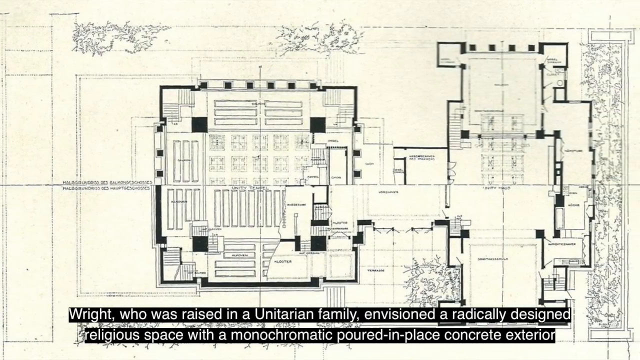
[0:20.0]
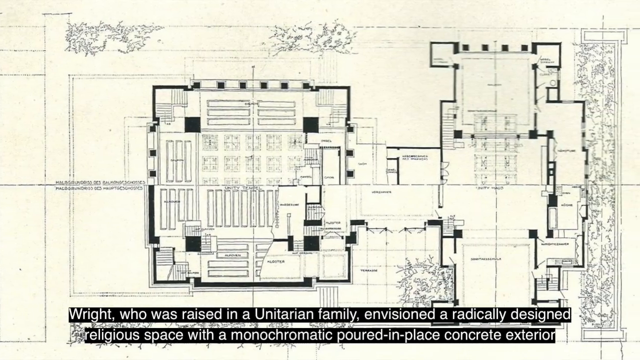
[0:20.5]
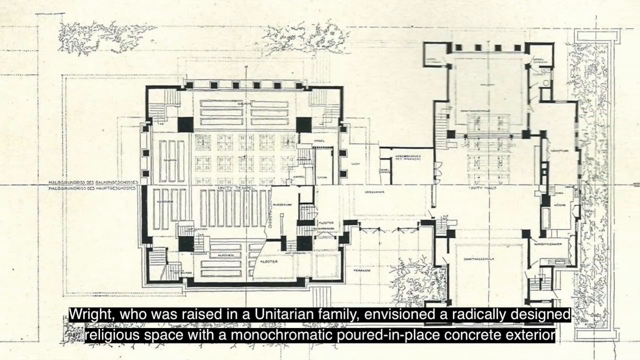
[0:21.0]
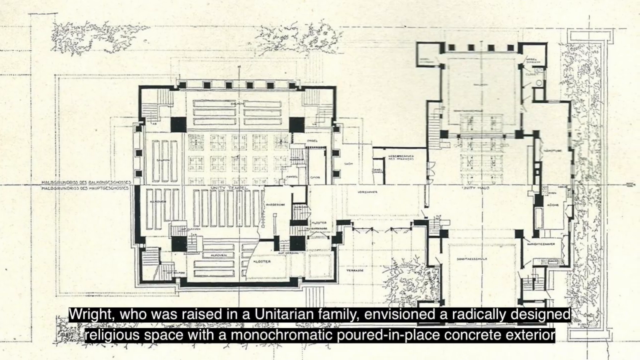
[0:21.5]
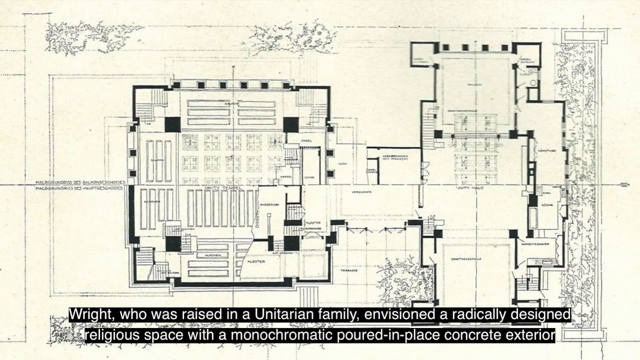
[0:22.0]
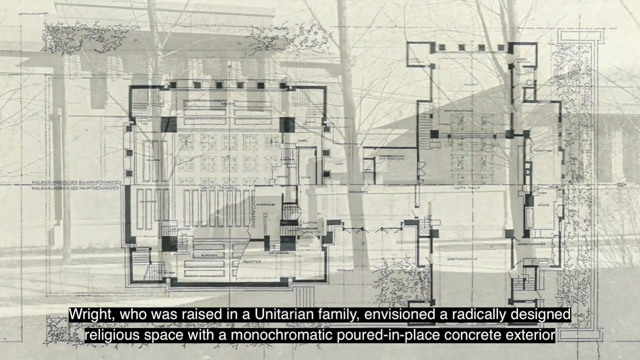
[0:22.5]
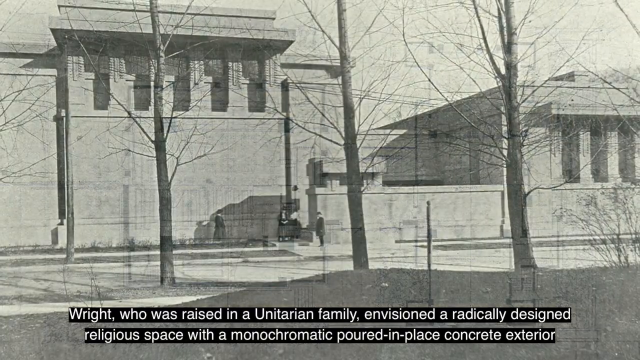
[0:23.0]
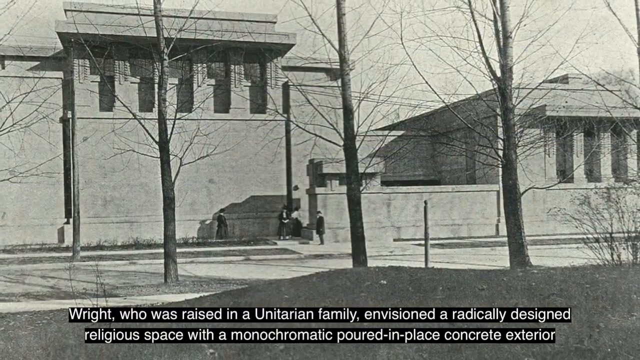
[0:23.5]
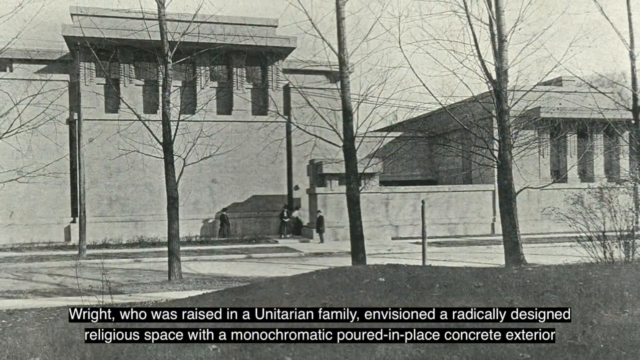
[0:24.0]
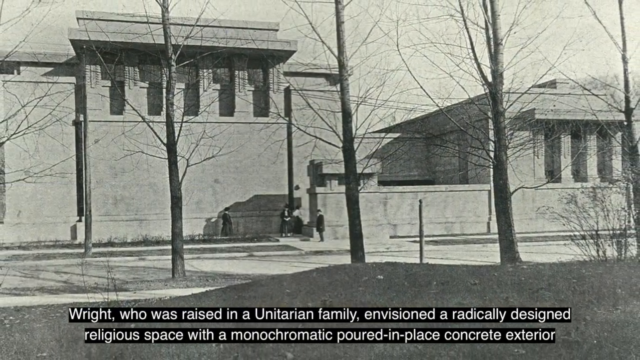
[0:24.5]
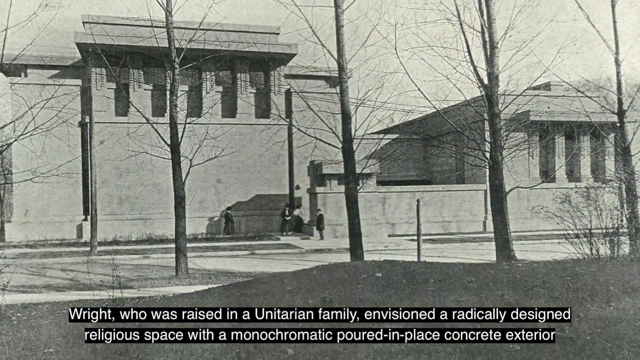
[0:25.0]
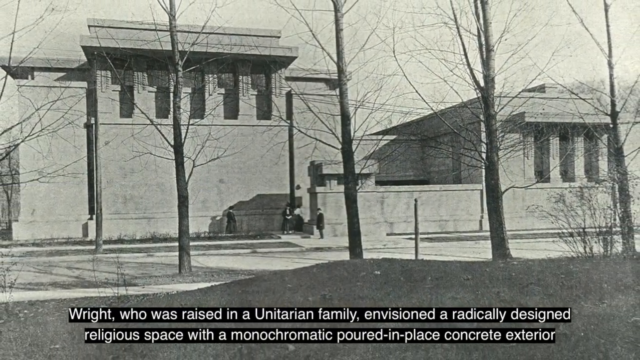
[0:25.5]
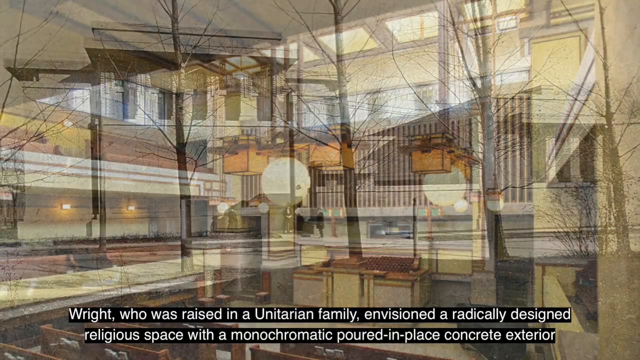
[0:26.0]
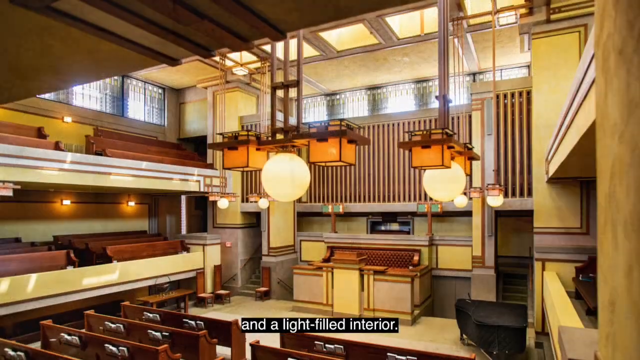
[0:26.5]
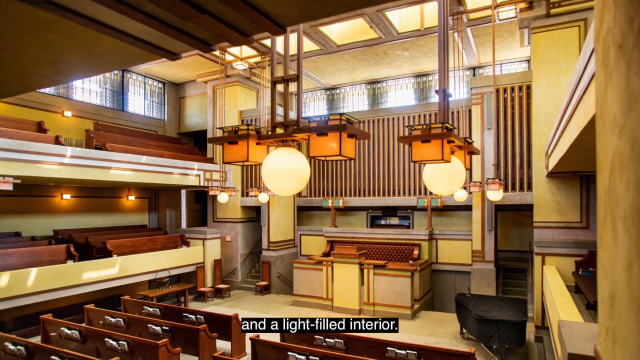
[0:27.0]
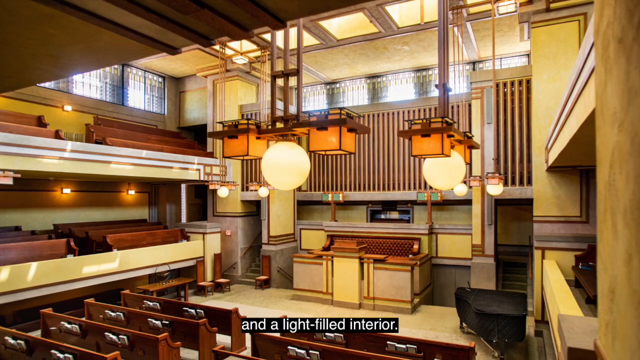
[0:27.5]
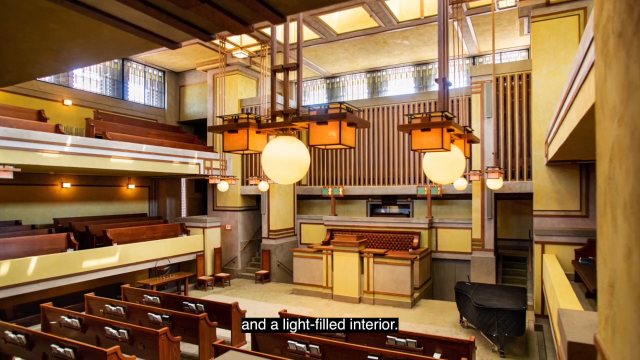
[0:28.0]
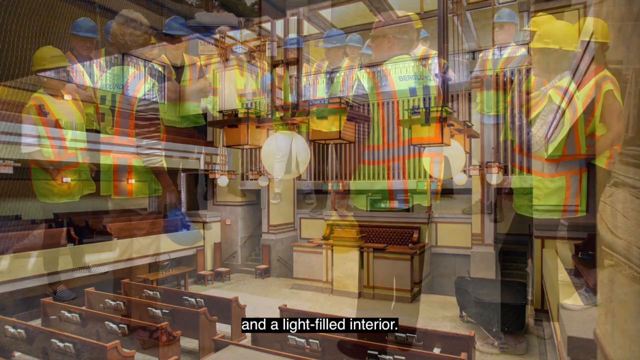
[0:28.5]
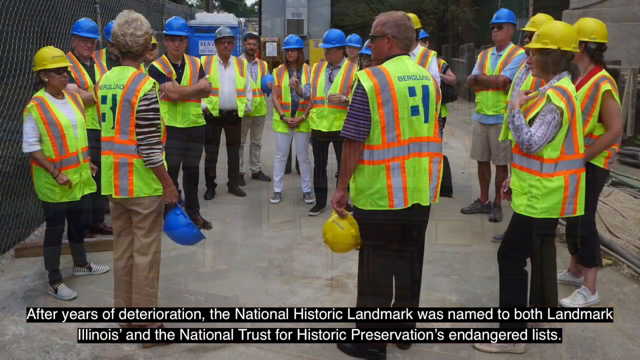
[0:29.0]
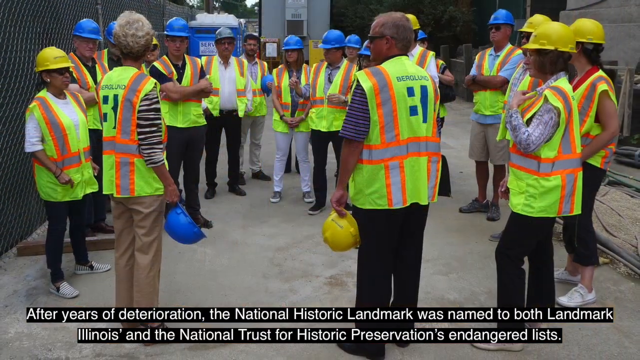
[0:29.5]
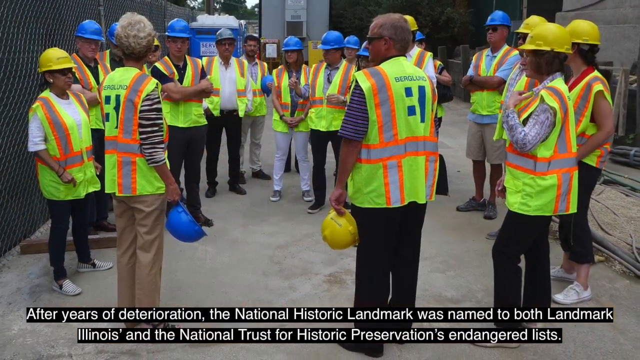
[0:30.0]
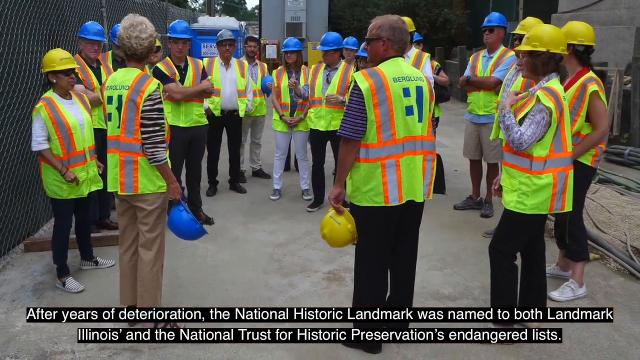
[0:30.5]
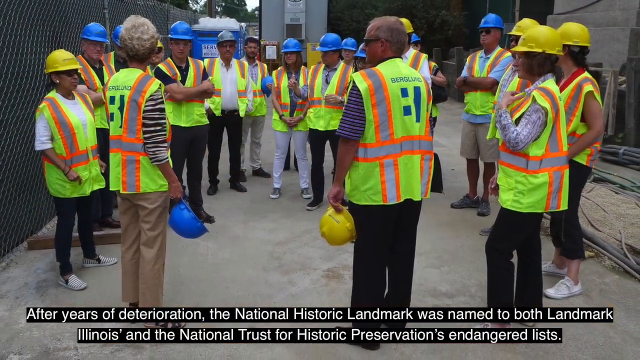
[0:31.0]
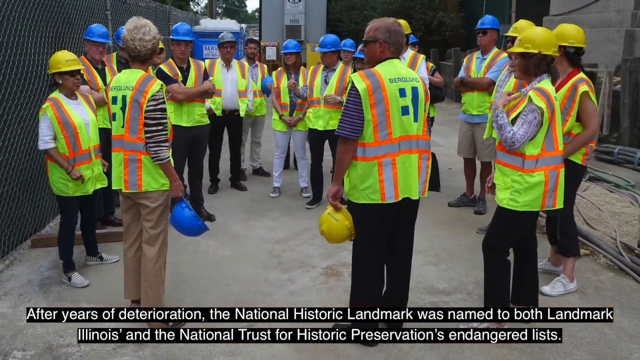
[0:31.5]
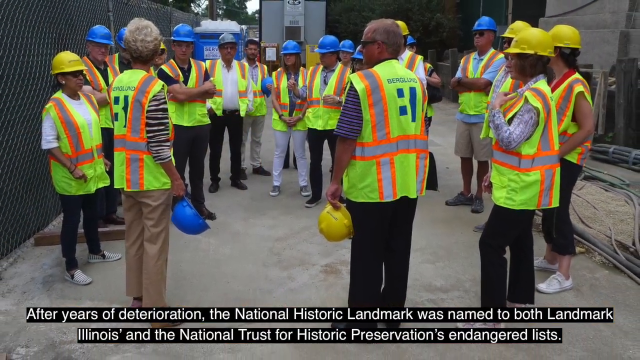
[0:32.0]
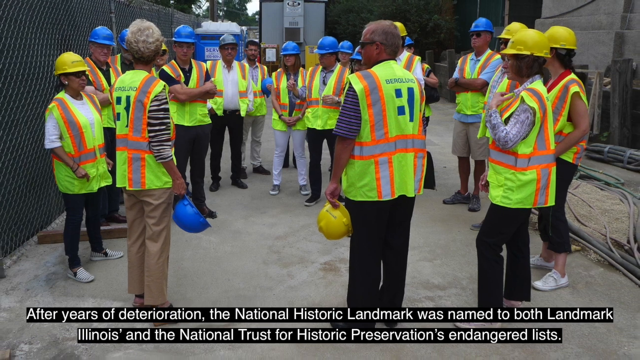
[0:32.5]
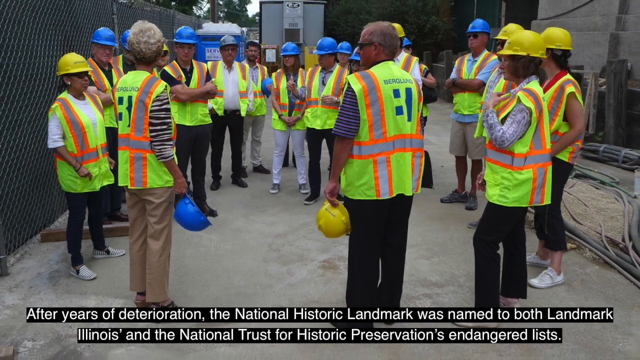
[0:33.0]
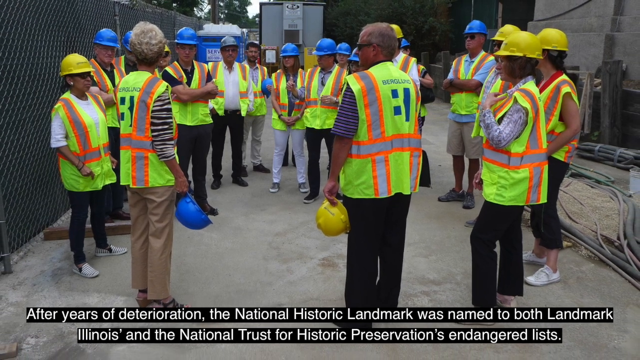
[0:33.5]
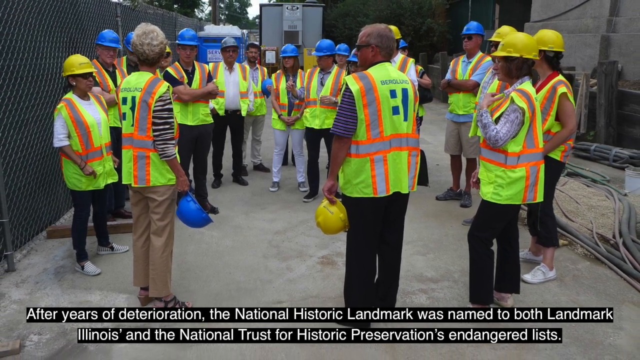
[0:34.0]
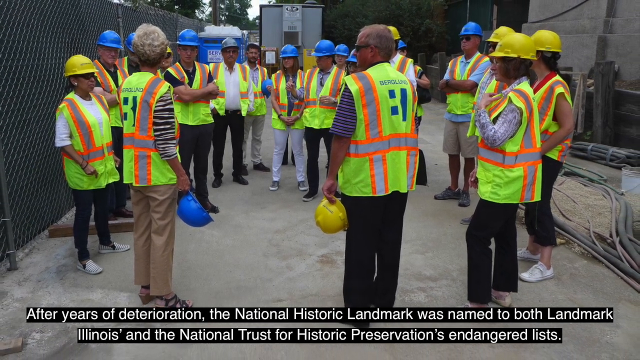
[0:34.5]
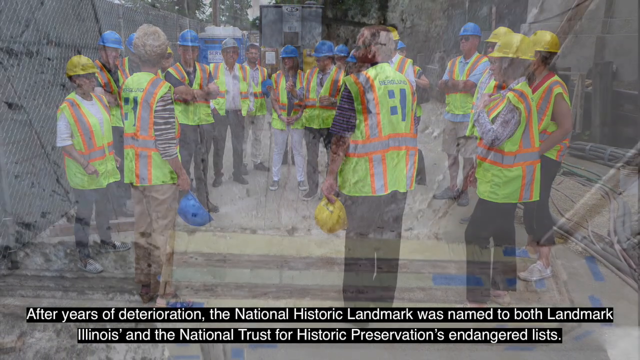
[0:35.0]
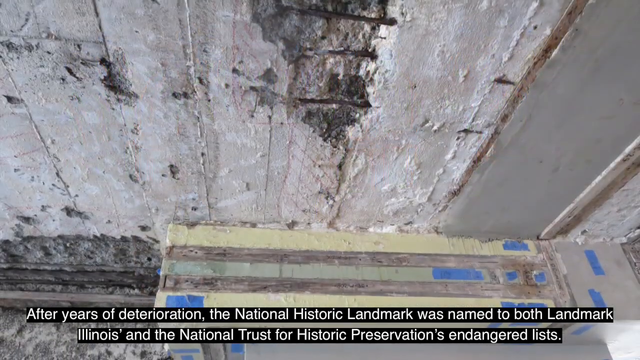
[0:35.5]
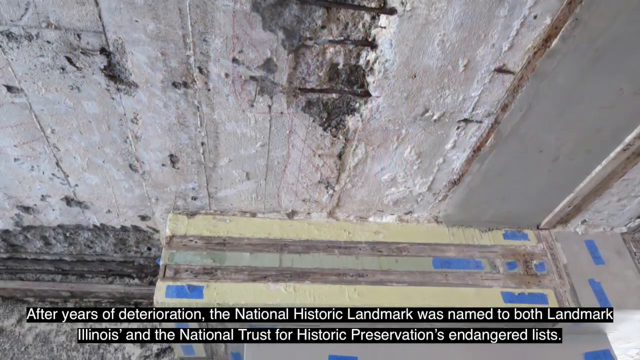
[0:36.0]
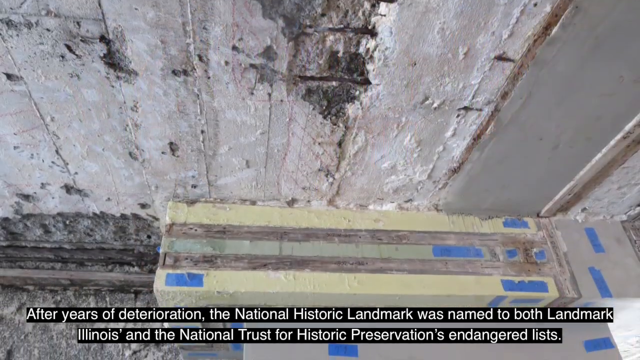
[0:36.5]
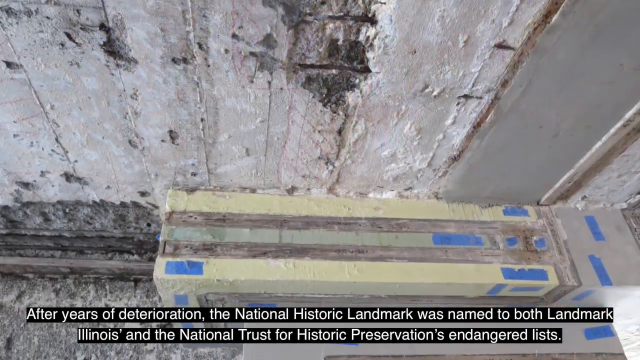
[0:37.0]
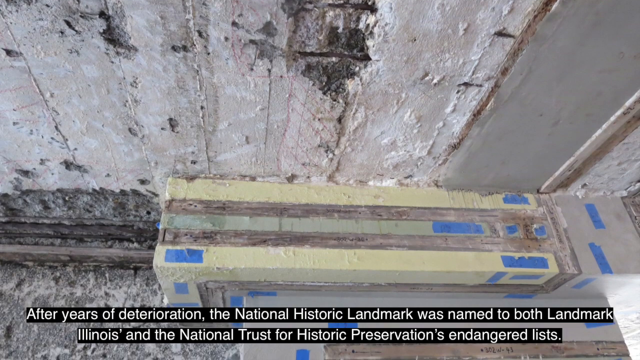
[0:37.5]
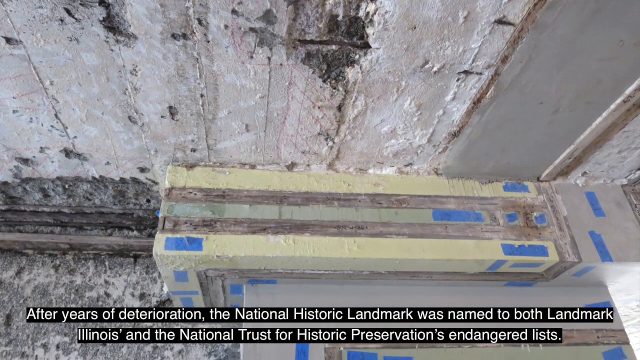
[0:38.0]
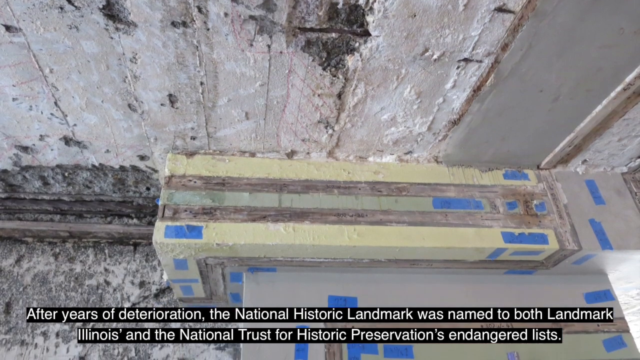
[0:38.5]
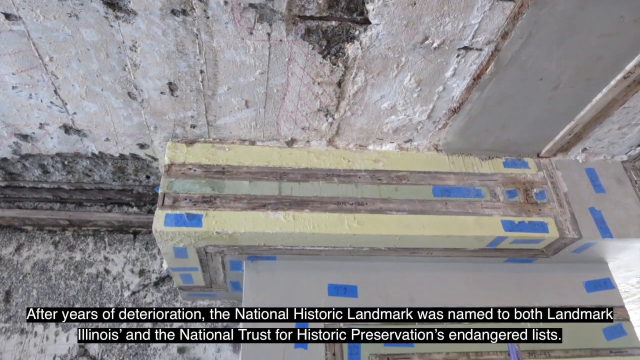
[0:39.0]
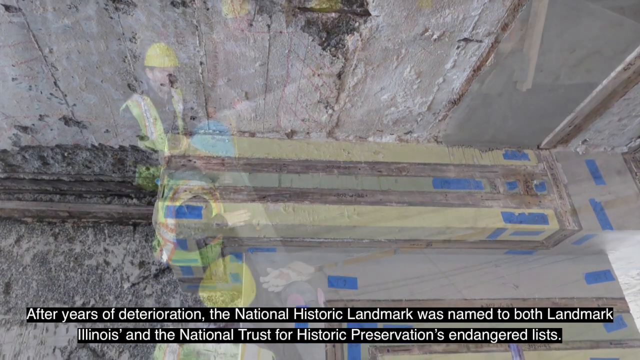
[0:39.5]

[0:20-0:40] The architectural plans for the temple are still on screen. They fade to another shot of the church's exterior, showing the large columns in the front, the strong rectangular shapes of the building and the flat roof. There is a wall in front of it. In the photograph, four people are in the front of the building, and several trees are around it. The image then fades to an interior shot of the space, which is lit. The lamps have square amber mica shades of Japanese aesthetic, interspersed with round off-white globes. There are lights up above the ceiling and along the tops of the walls. There are rows of pews in the front and the bottom, and on each side two tiers of pews go up toward the top. Next comes a picture of a number of people in safety vests and hard hats standing in a circle as if discussing plans. Then an interior shot shows the building roughed out in preparation for restoration.